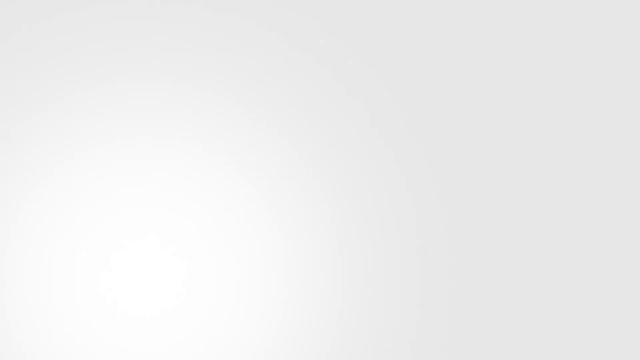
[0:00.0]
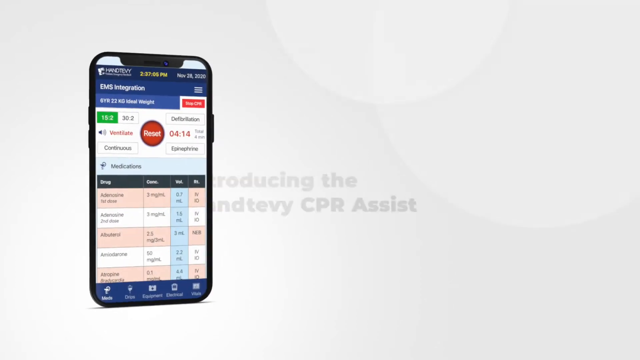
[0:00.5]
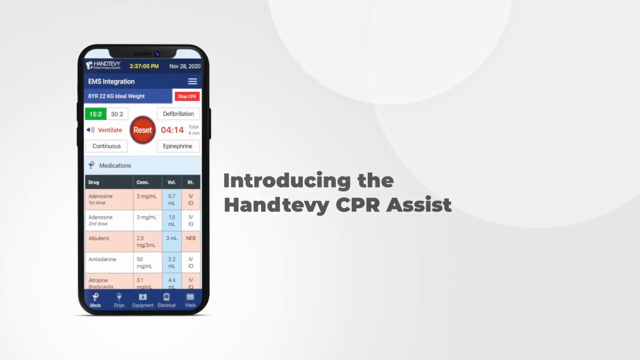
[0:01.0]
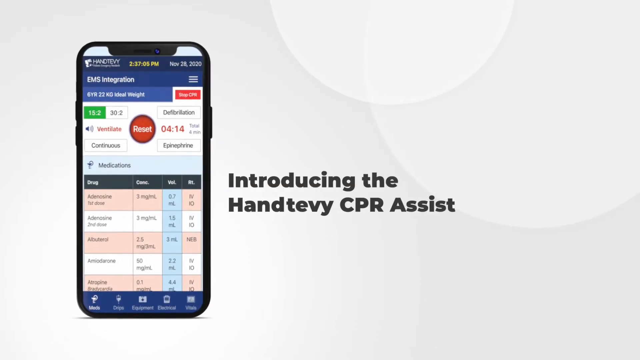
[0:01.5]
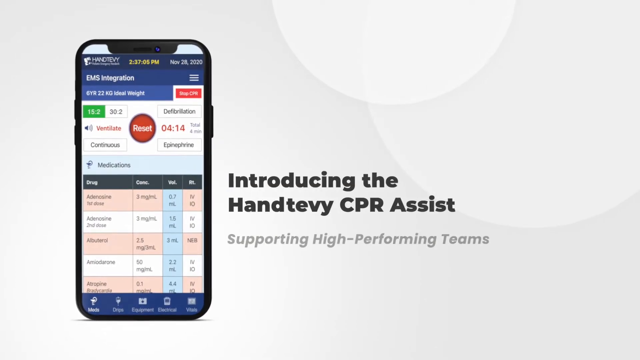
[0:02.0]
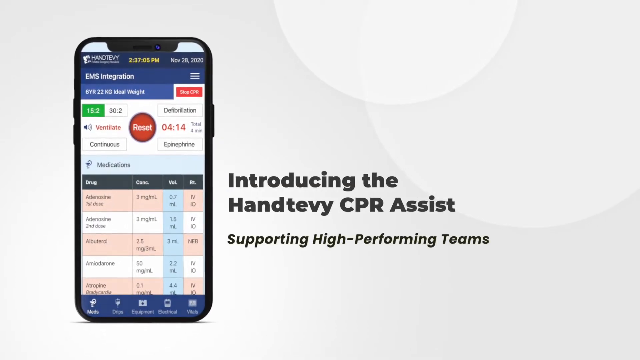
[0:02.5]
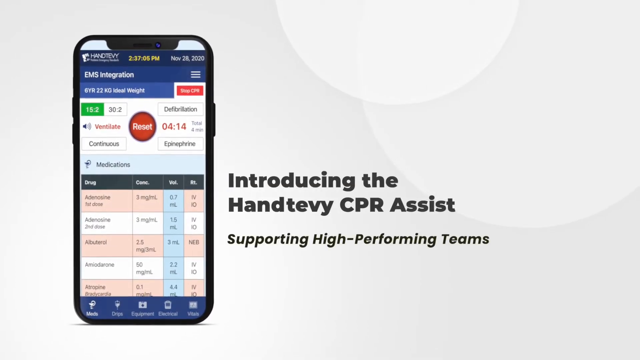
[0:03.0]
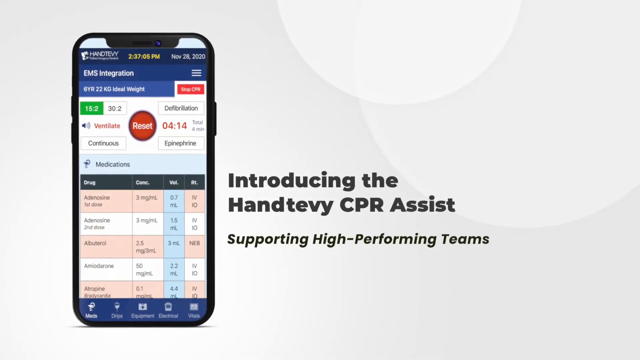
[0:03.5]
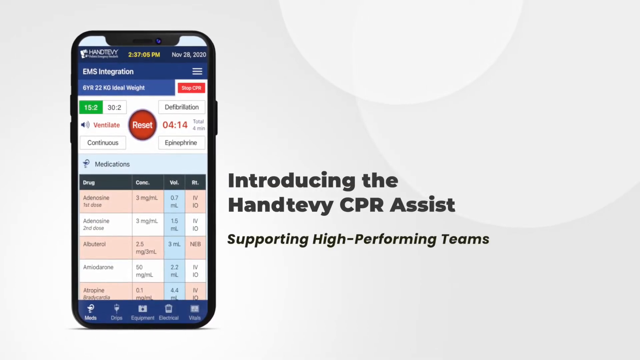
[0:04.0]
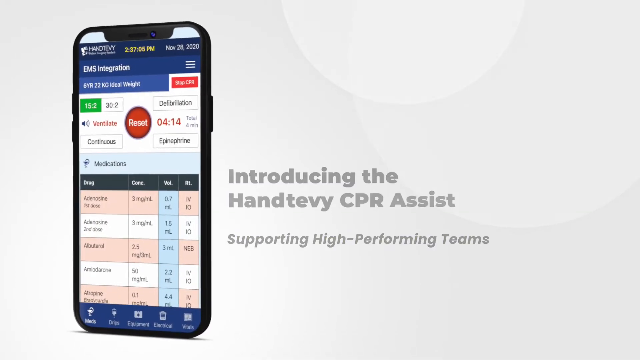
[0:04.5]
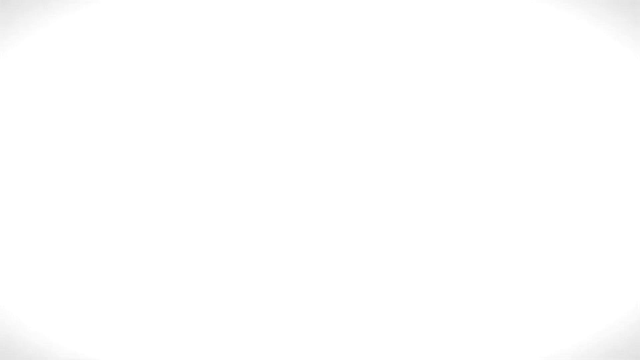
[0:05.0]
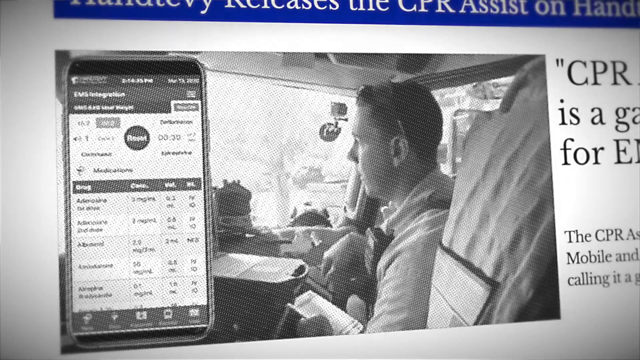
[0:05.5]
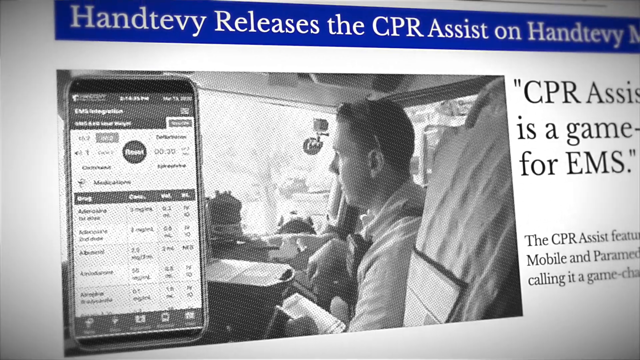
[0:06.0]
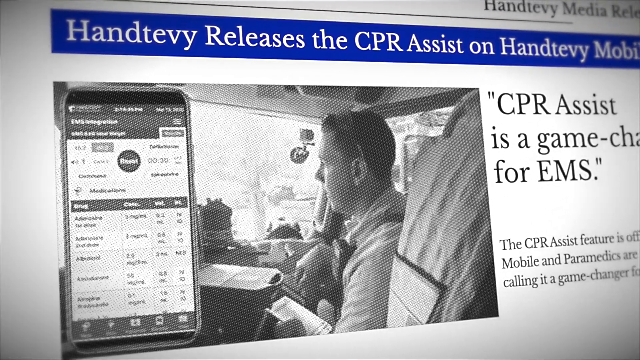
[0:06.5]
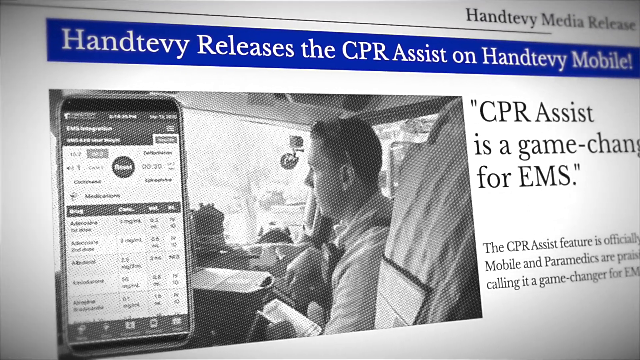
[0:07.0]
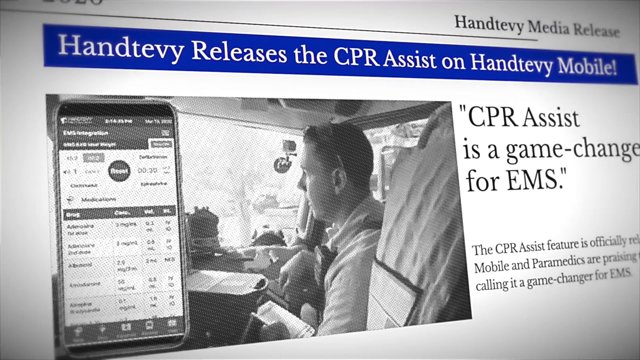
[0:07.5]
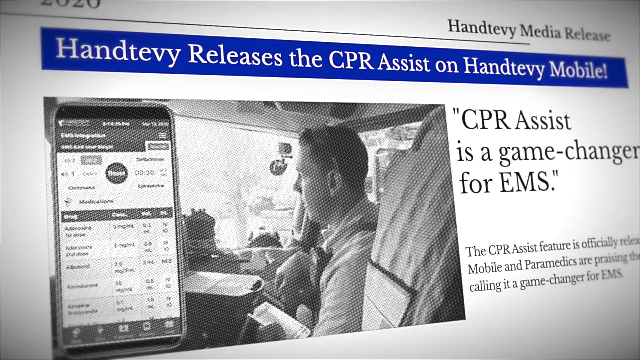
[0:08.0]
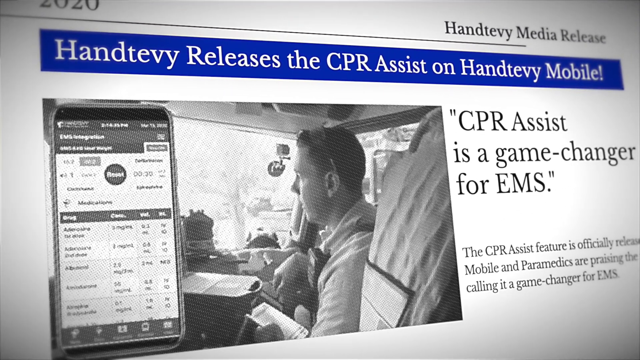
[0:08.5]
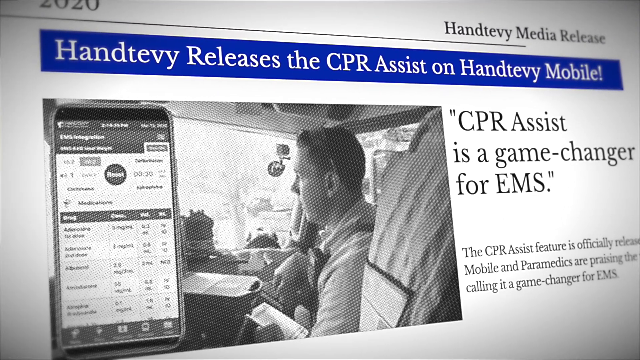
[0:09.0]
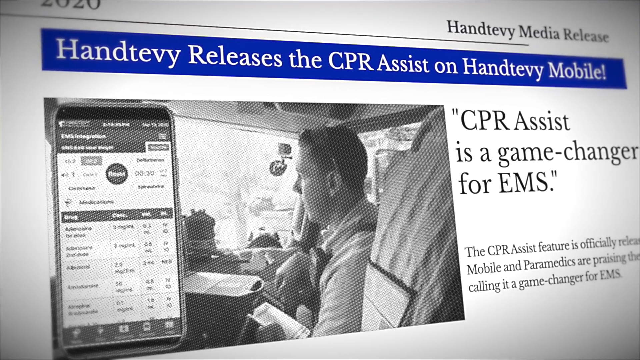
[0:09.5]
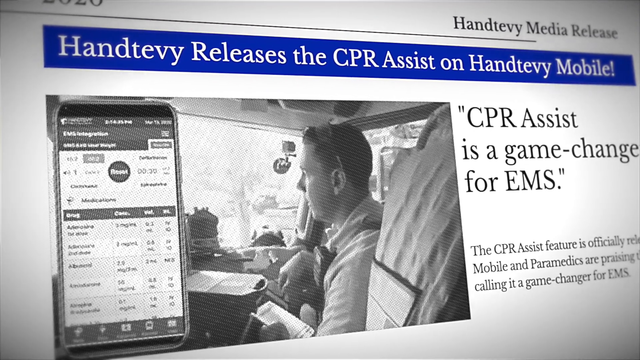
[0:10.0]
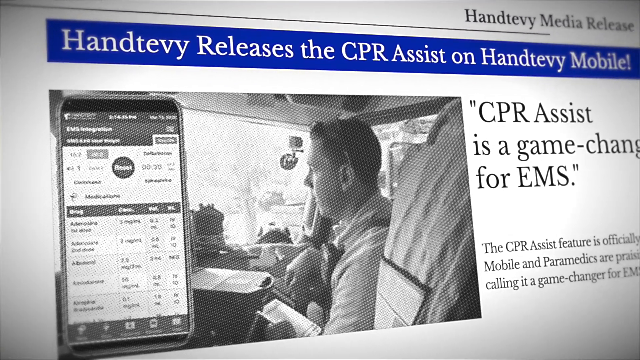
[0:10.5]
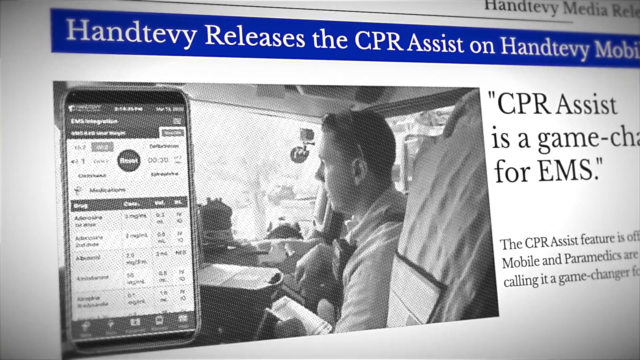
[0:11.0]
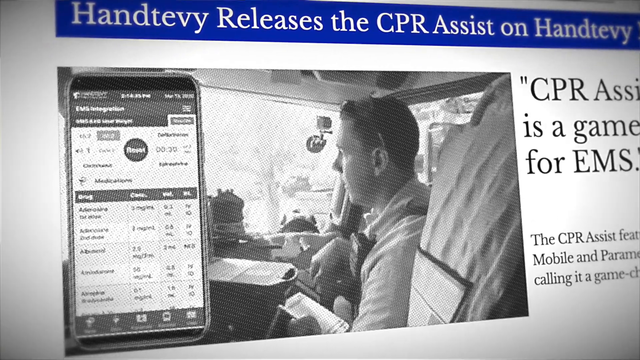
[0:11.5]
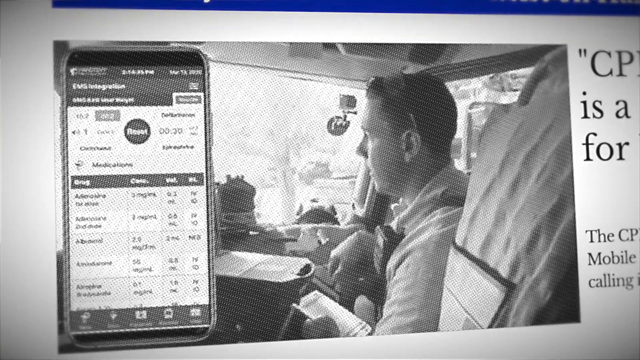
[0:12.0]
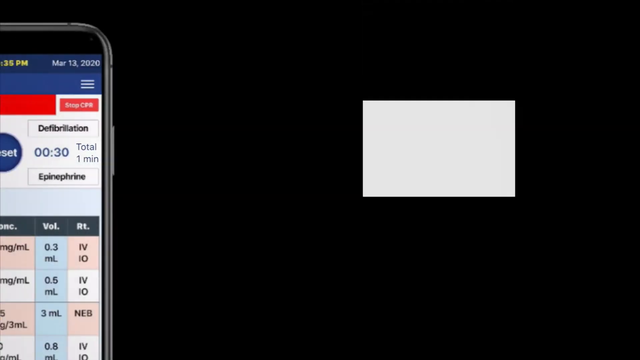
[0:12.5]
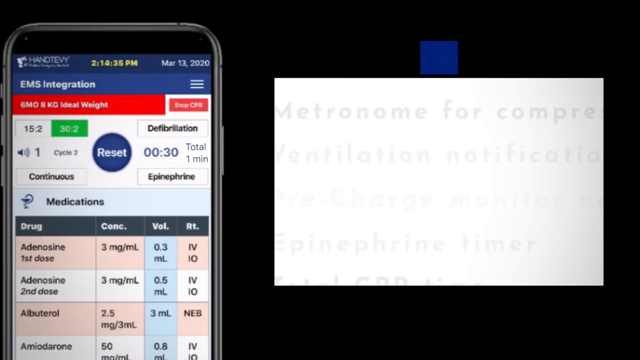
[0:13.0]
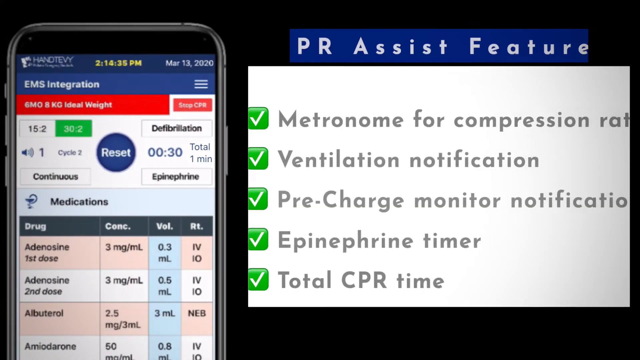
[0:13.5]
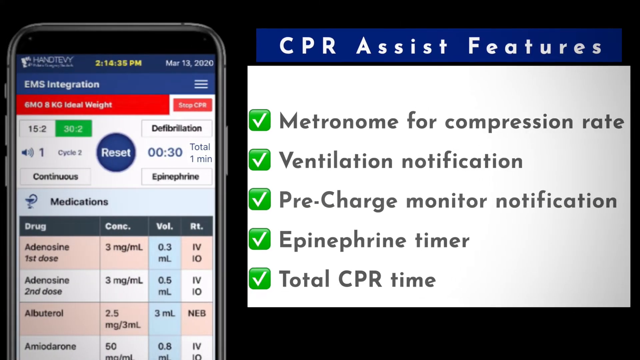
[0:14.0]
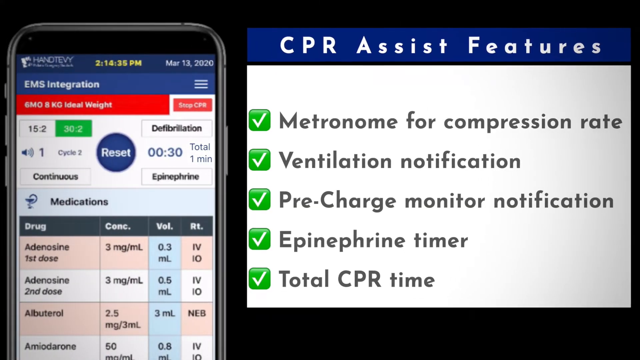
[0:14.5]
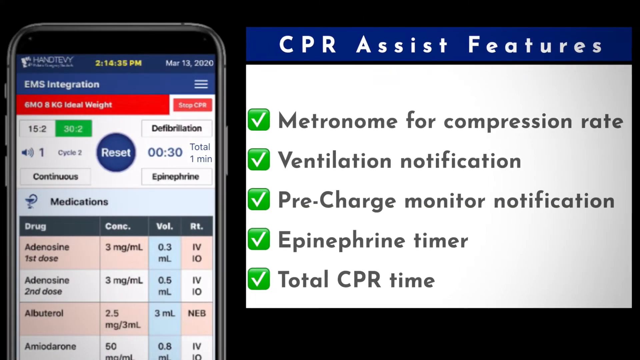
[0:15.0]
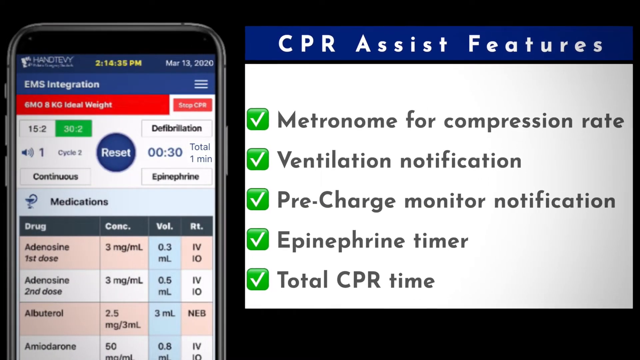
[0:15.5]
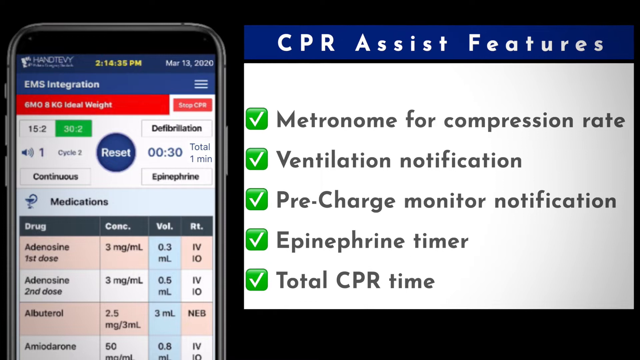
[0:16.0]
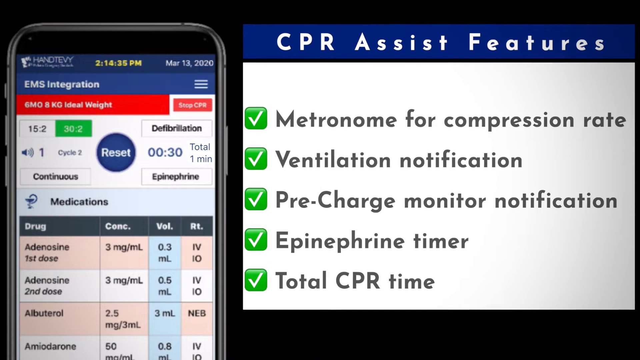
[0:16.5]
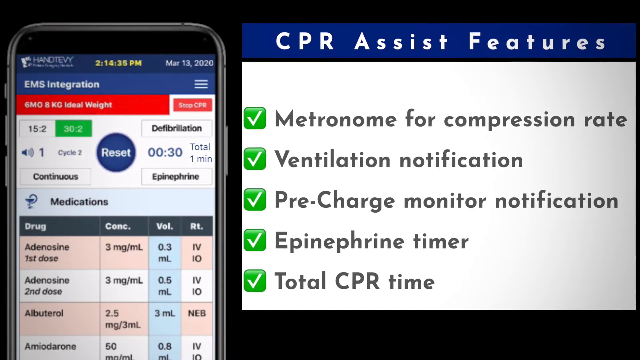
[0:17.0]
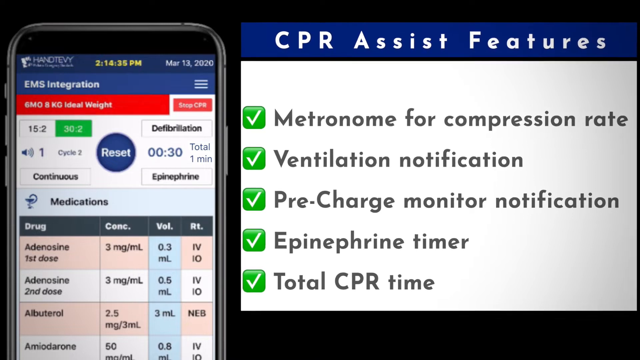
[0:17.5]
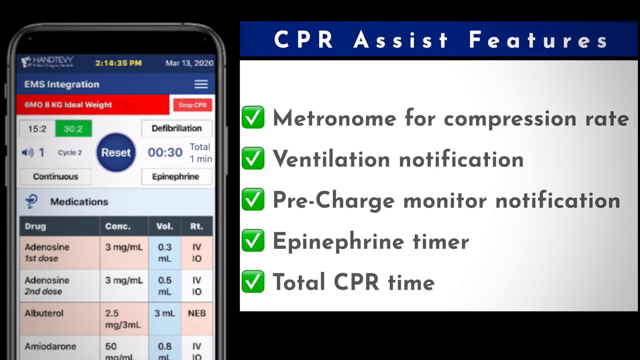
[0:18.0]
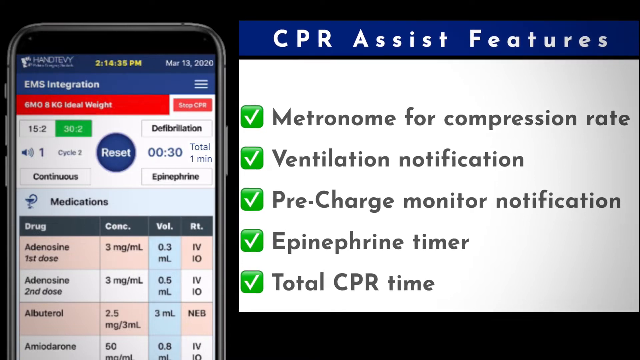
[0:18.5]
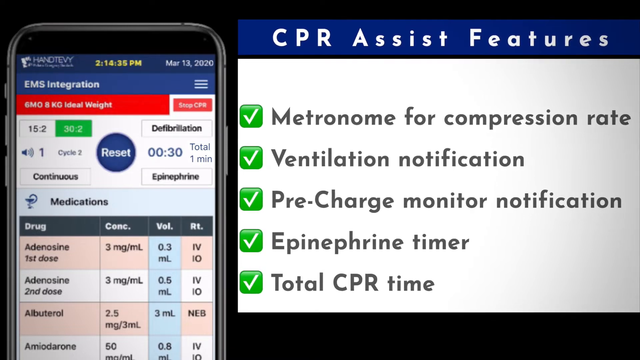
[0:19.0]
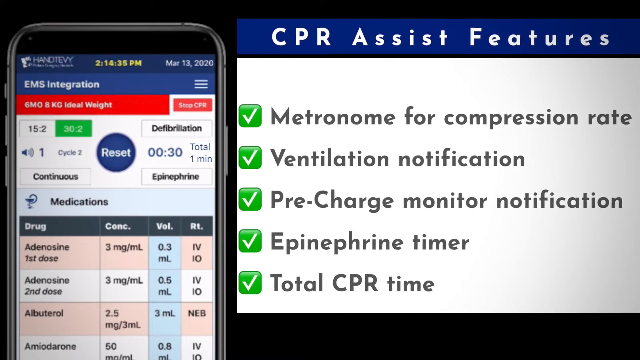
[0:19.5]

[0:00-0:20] The video opens on a screen showing what looks like an iPhone on the left, with text on the right that reads "Introducing a Handtevy CPR Assist, Supporting High-Performing Teams." The screen fades to what looks like a close-up of a press release headlined "Handtevy Releases the CPR Assist on Handtevy Mobile!" It is accompanied by a photograph of what looks like an EMS worker sitting in the front seat of an ambulance, with the same iPhone screen next to him in the photo. On the right is a quote that reads "CPR assist is a game-changer for EMS." The camera zooms in on the photograph, and then the screen changes to a close-up of an iPhone screen on the left side, with a text box on the right listing the CPR Assist features: "Metronome for compression rate," "Ventilation notification," "Pre-charge monitor notification," "Epinephrine timer," and "Total CPR time."